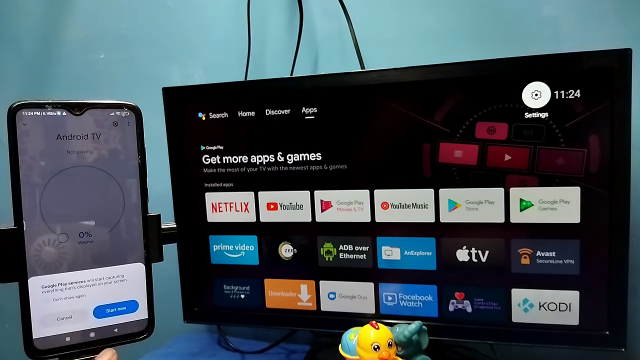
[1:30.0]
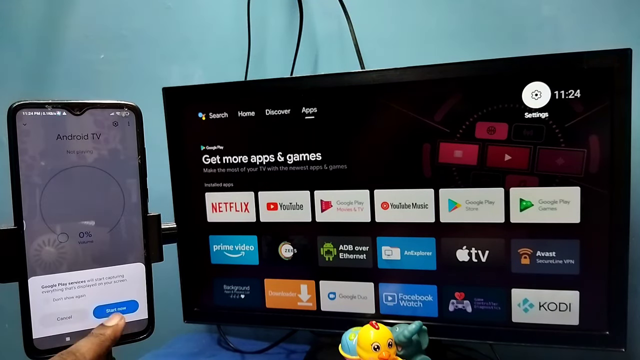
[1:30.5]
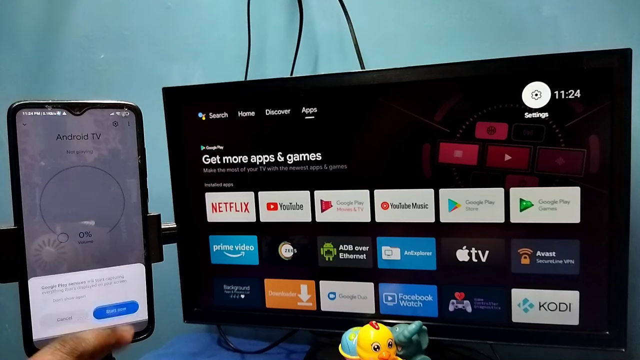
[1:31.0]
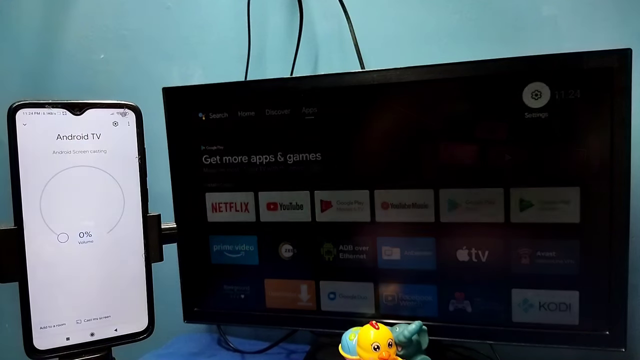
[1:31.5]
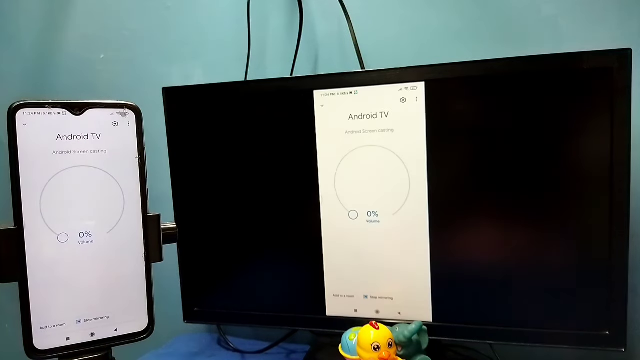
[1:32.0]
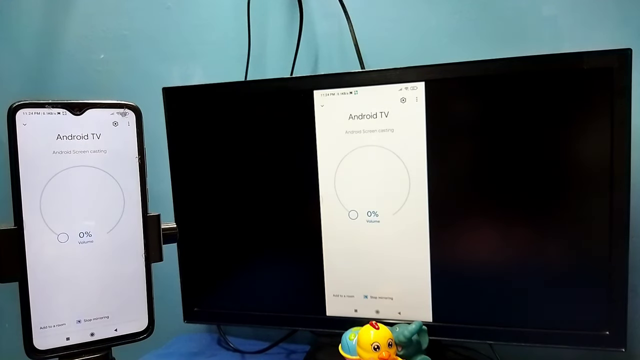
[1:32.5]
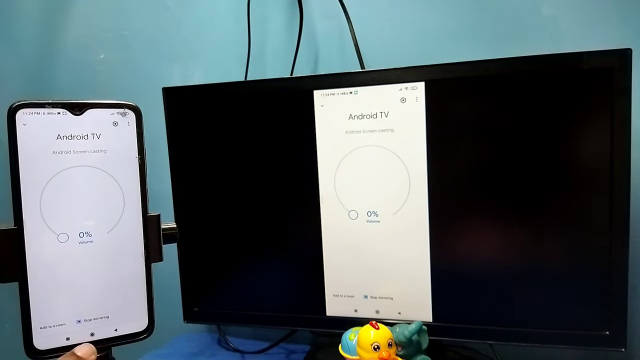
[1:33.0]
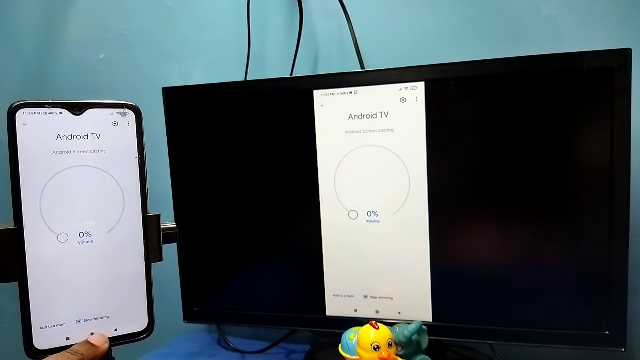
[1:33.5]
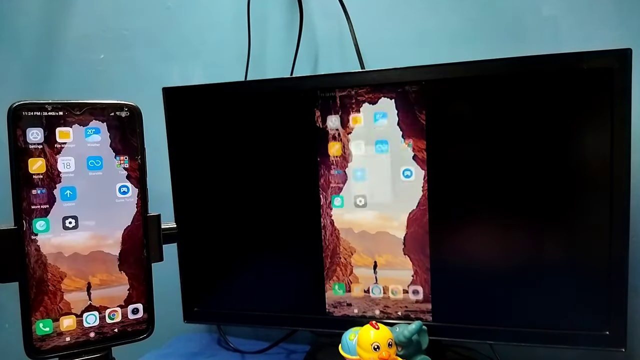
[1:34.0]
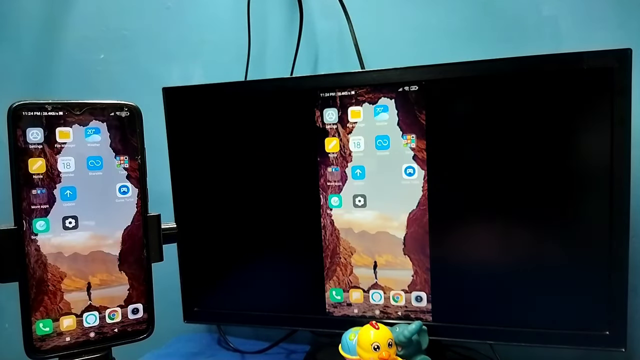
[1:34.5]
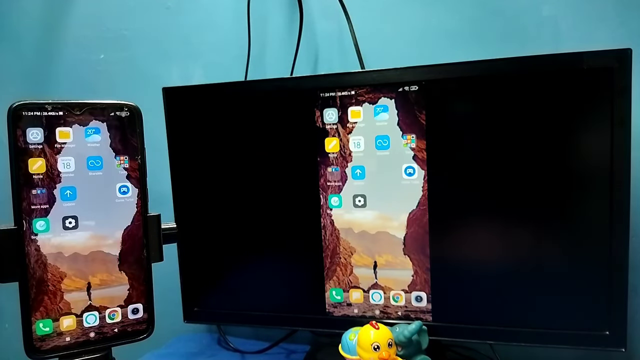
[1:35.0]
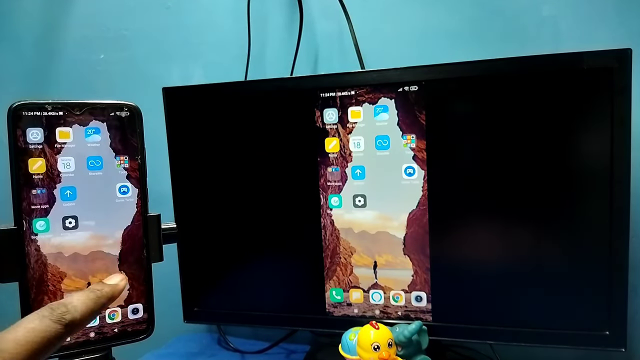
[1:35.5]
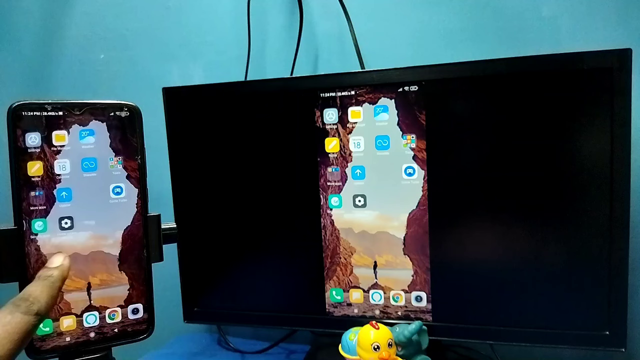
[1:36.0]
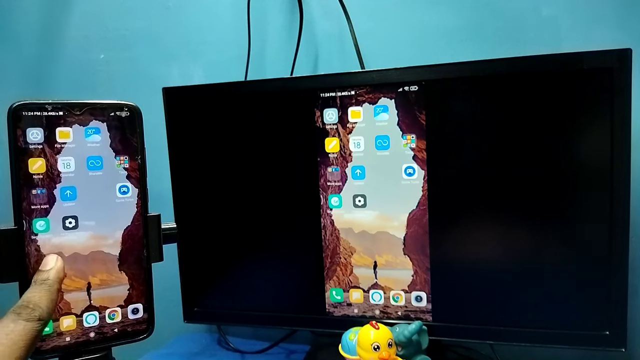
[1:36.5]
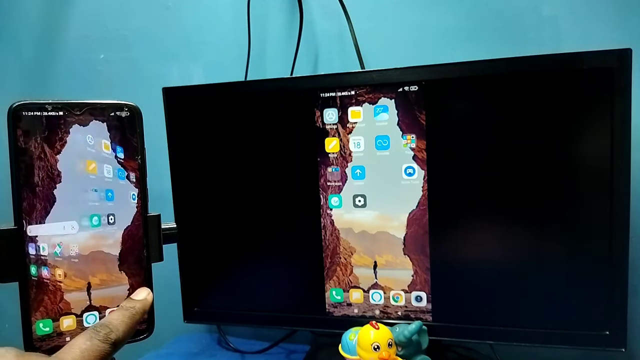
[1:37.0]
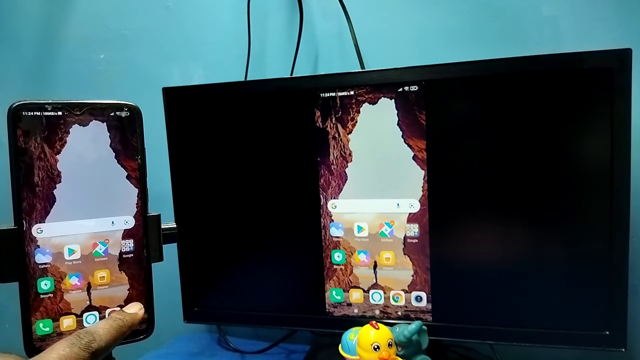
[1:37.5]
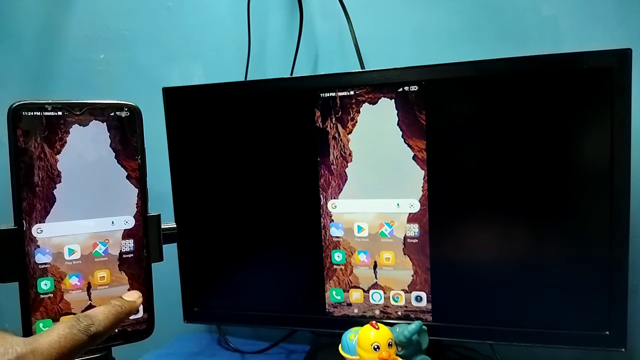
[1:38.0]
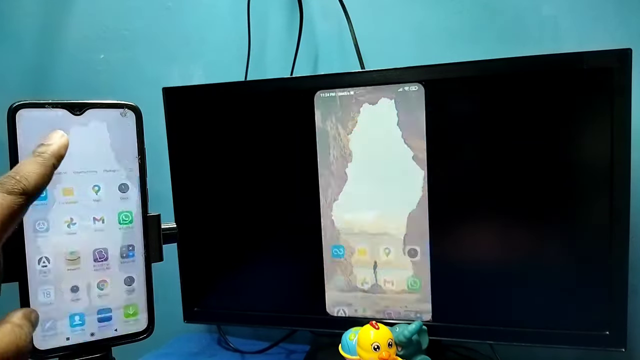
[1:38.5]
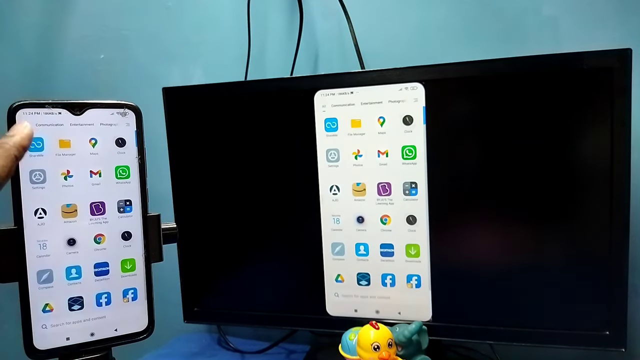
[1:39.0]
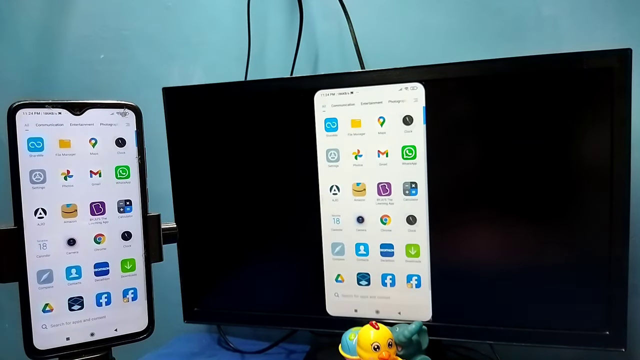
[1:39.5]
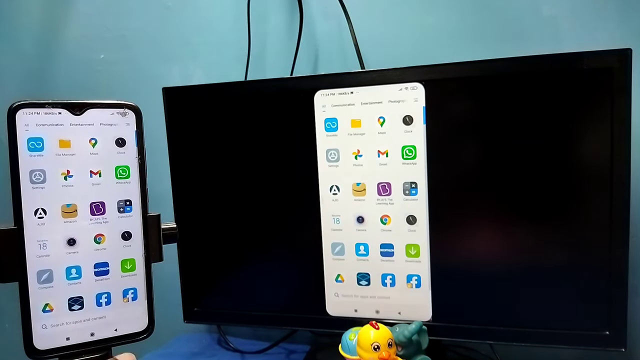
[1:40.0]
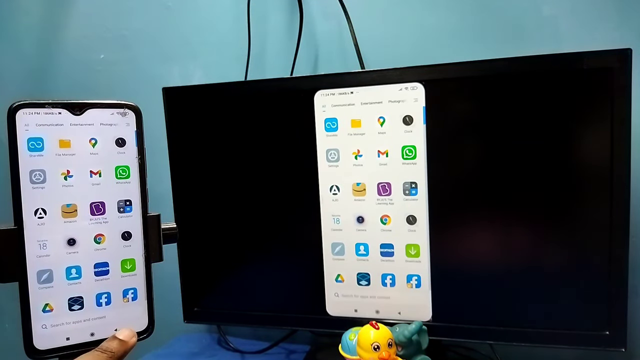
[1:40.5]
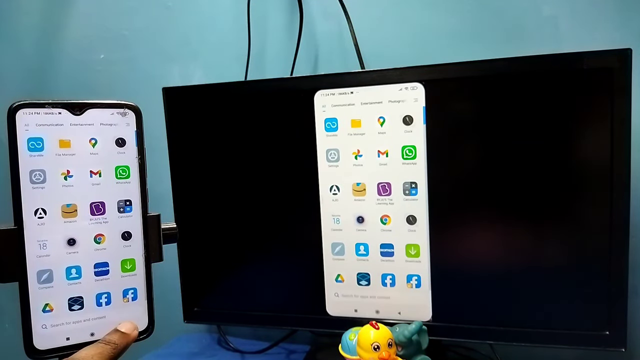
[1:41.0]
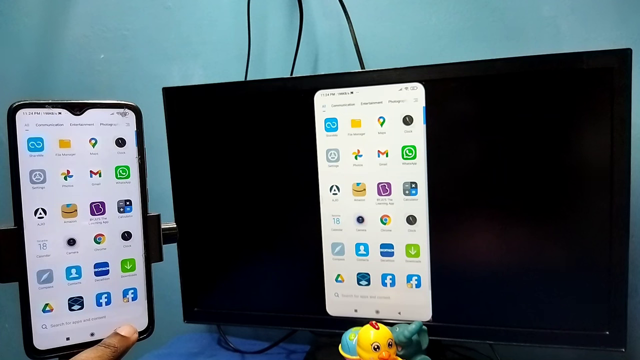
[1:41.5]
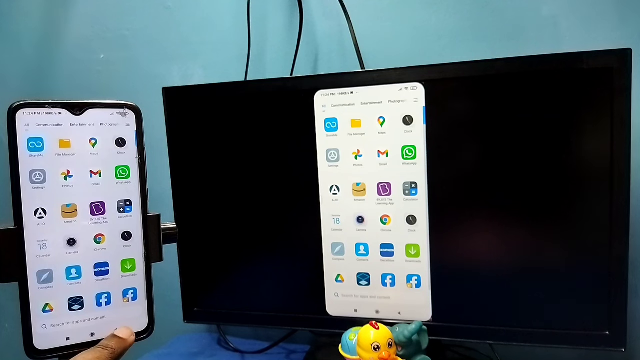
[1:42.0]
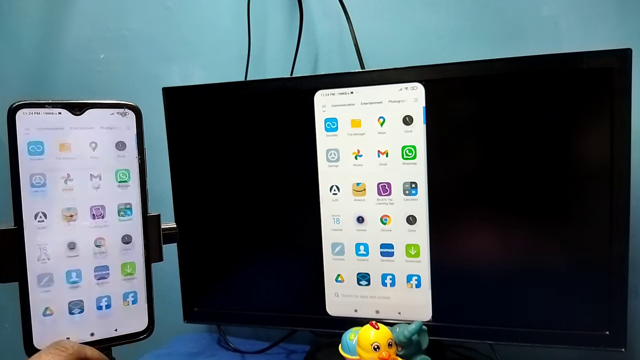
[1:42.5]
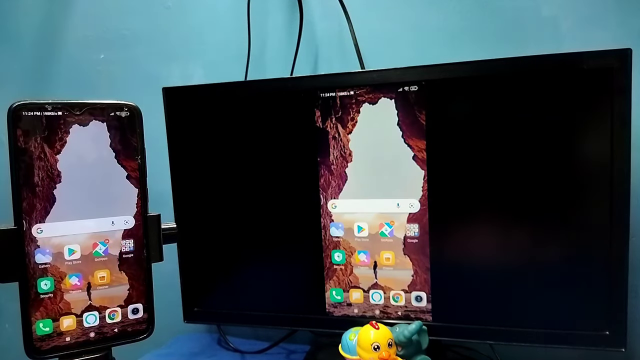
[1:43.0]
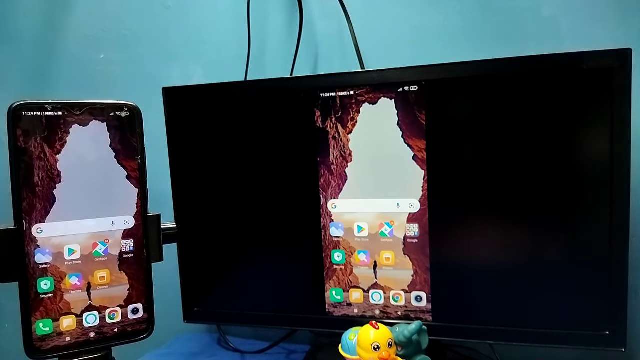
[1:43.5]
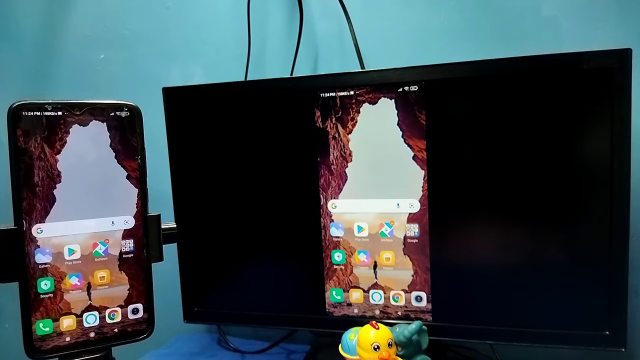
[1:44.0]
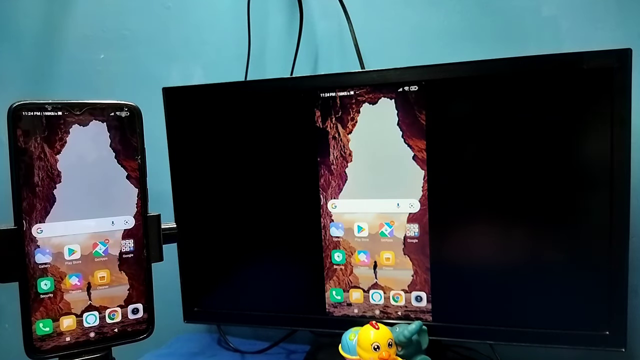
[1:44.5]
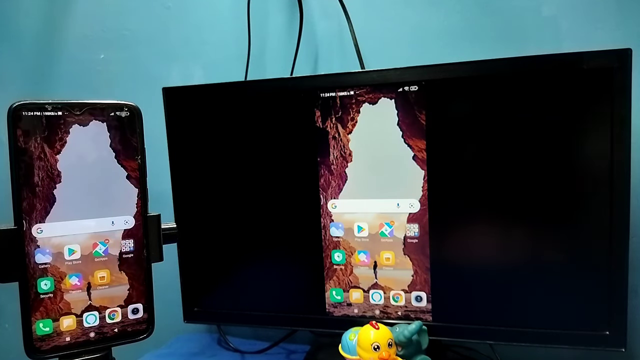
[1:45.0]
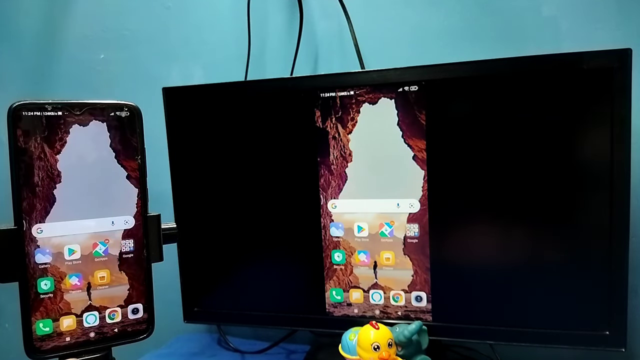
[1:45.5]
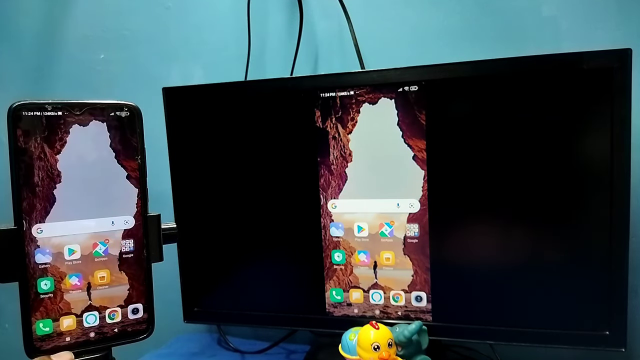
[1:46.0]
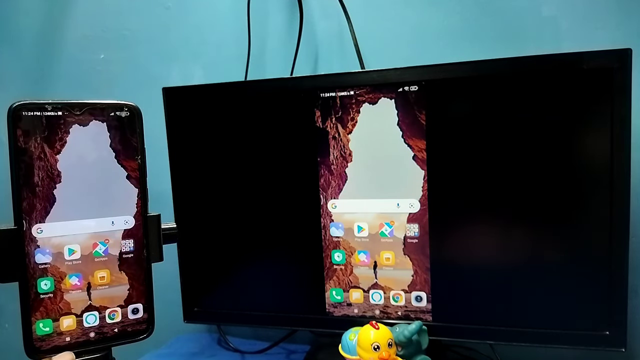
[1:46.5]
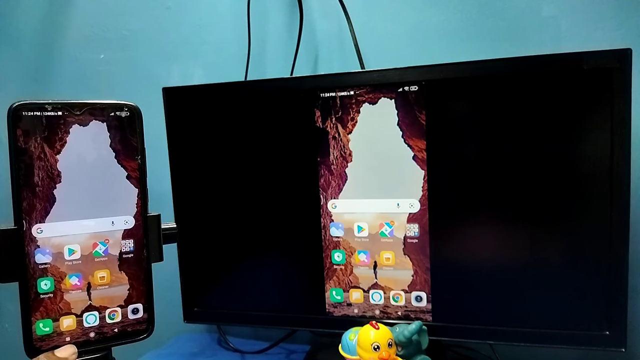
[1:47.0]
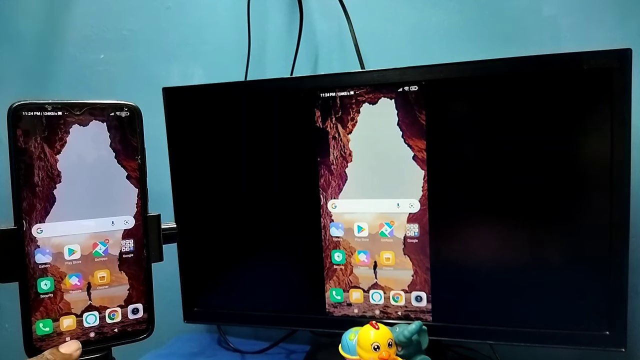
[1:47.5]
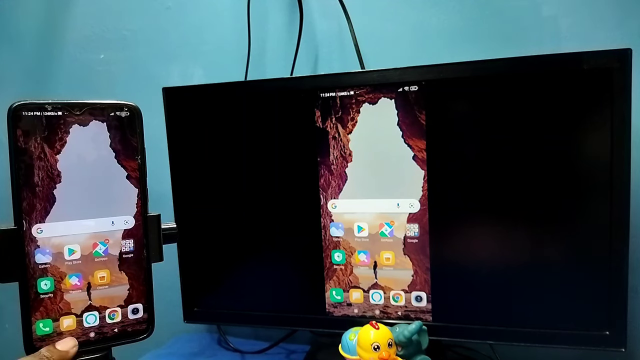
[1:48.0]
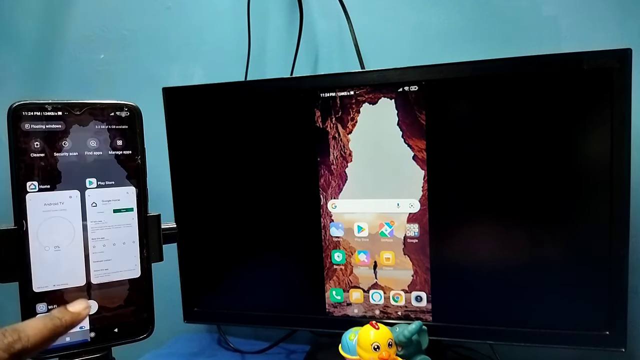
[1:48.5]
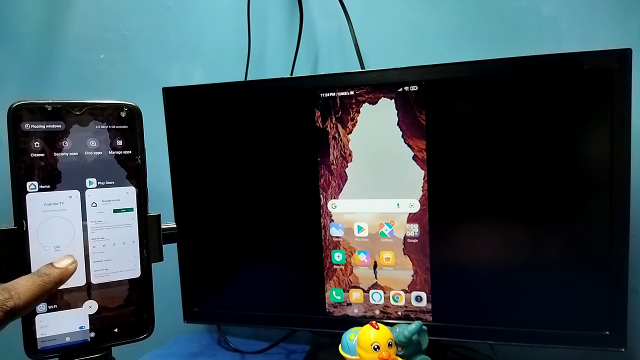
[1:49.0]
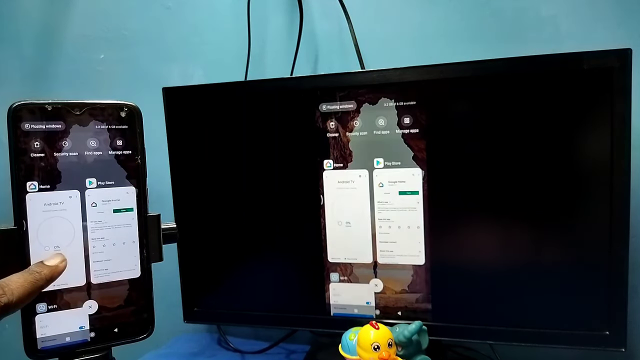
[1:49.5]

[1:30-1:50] The cell phone is on the Google Home app page. Android TV starts up first, and then the phone's wallpaper and installed apps are projected onto the flat screen TV. As the person thumbs through the phone, fingers touching it, what is on the TV changes in real time, with no delay. The TV background is black except for a representation of the cell phone.